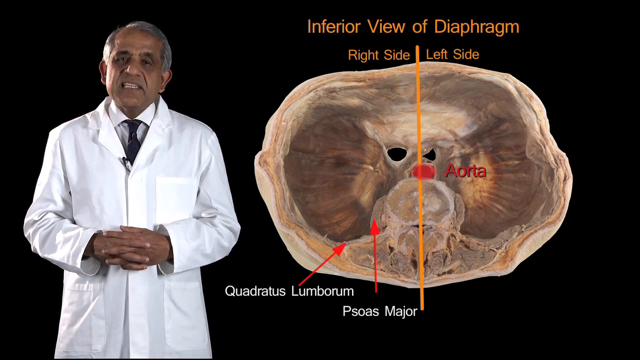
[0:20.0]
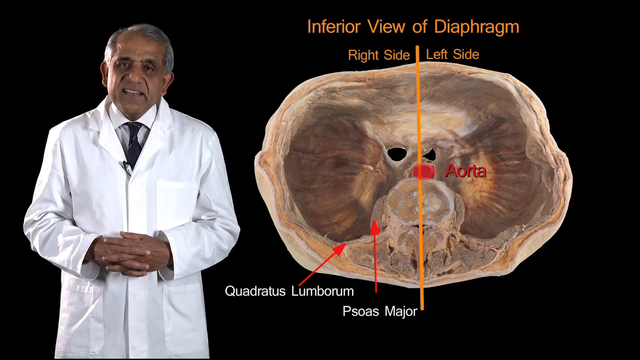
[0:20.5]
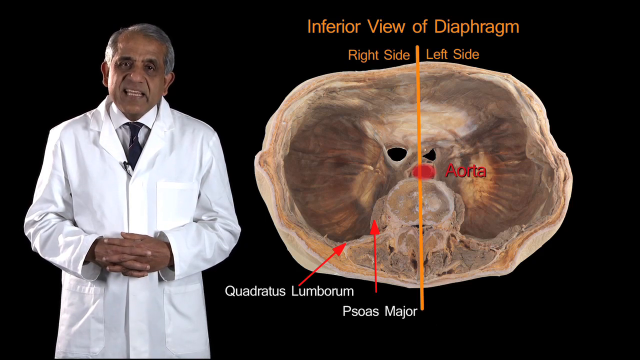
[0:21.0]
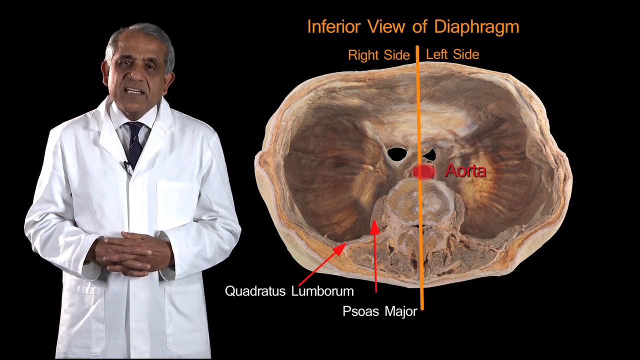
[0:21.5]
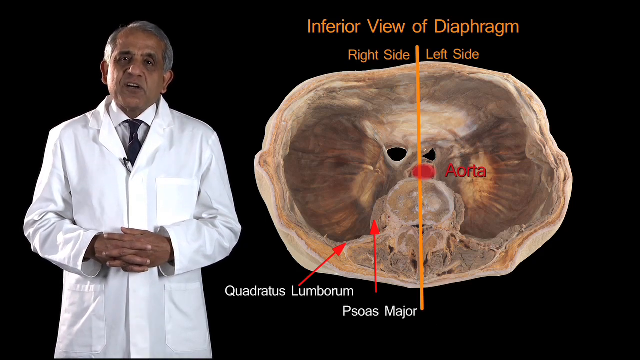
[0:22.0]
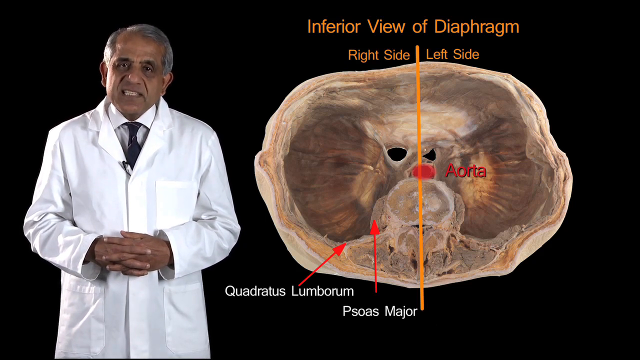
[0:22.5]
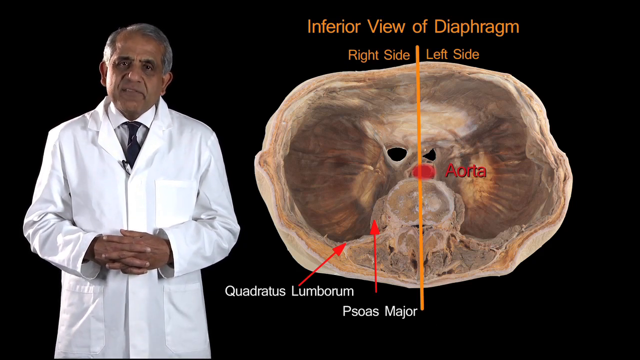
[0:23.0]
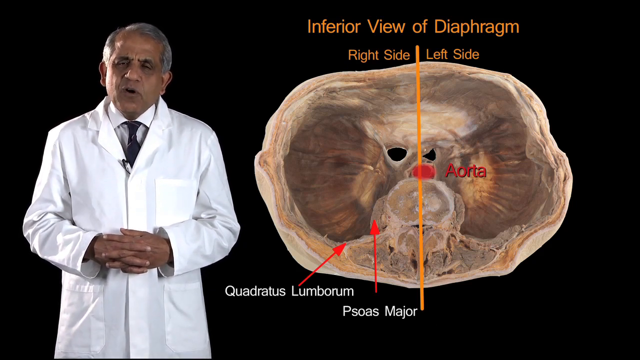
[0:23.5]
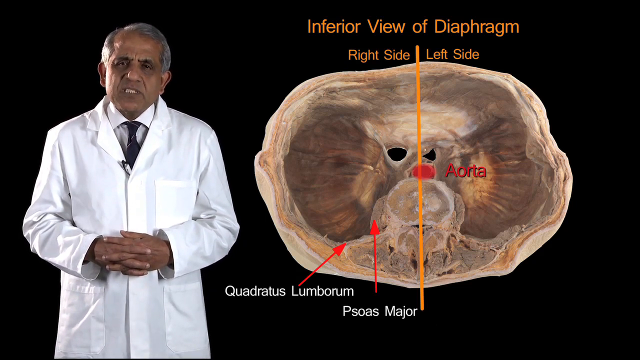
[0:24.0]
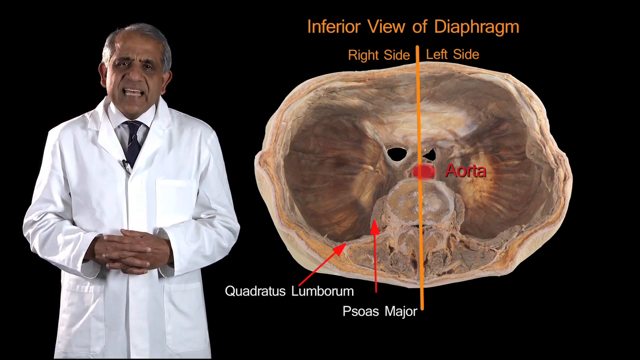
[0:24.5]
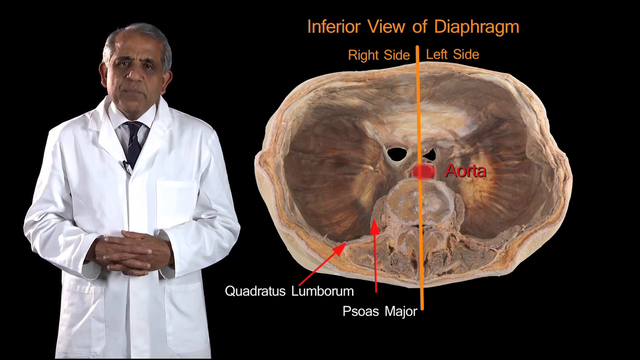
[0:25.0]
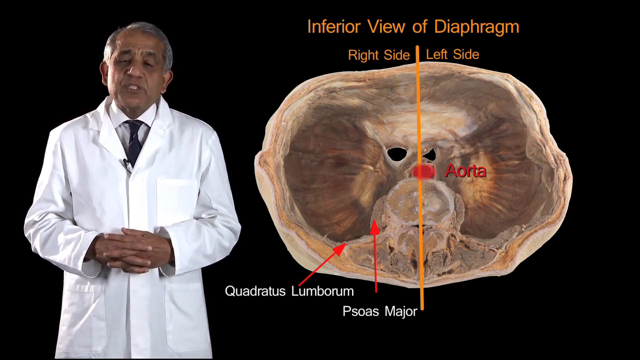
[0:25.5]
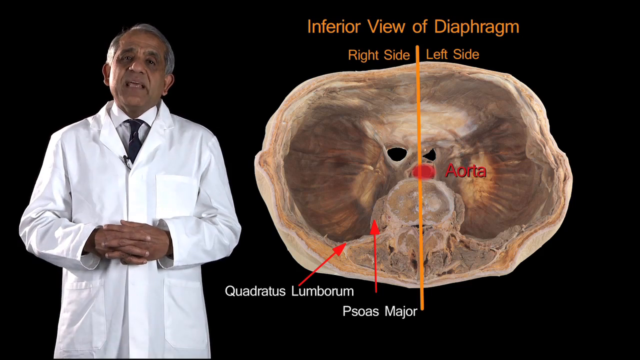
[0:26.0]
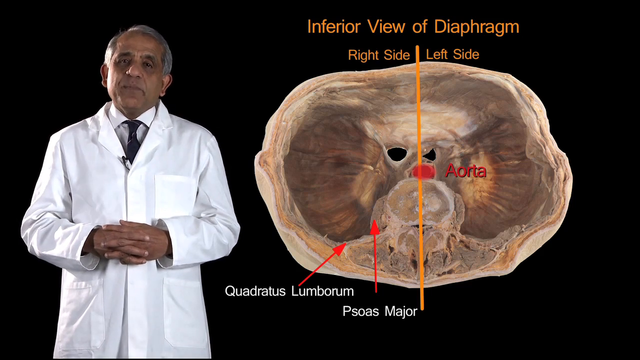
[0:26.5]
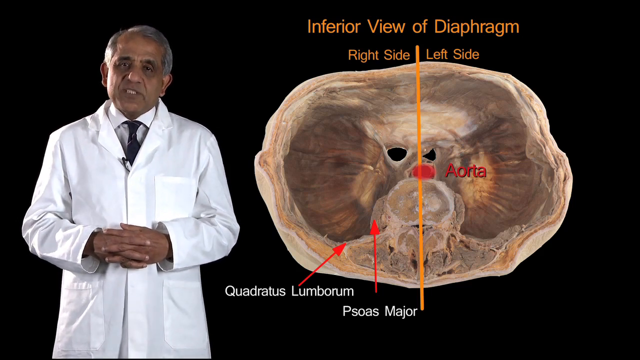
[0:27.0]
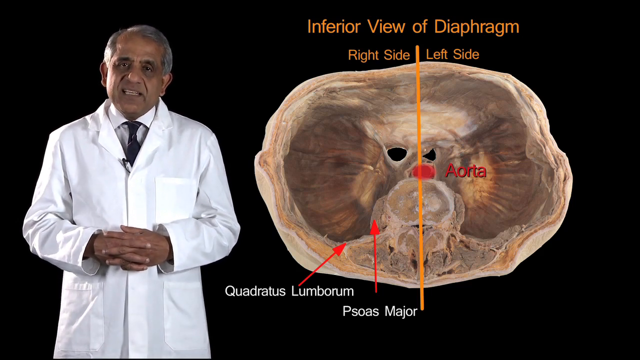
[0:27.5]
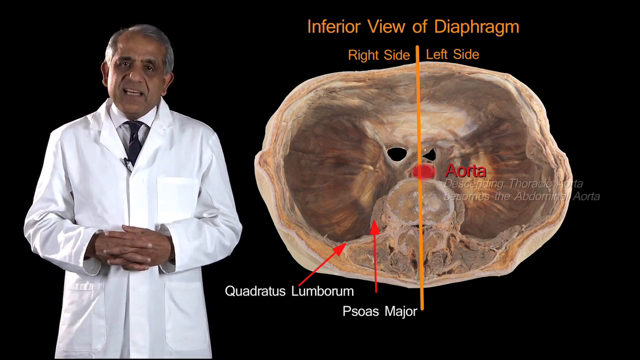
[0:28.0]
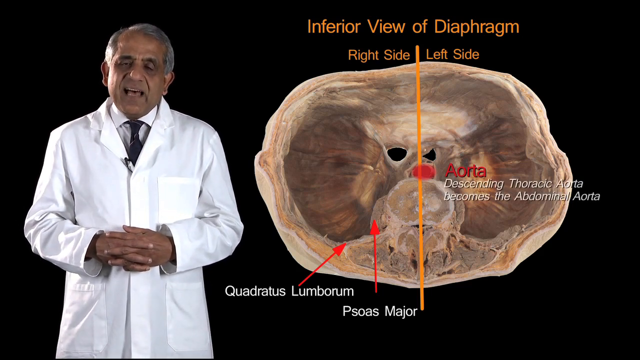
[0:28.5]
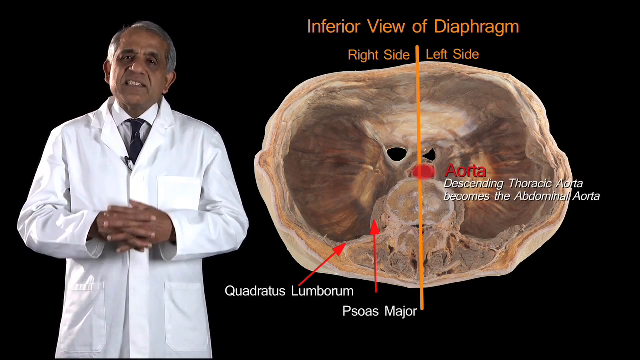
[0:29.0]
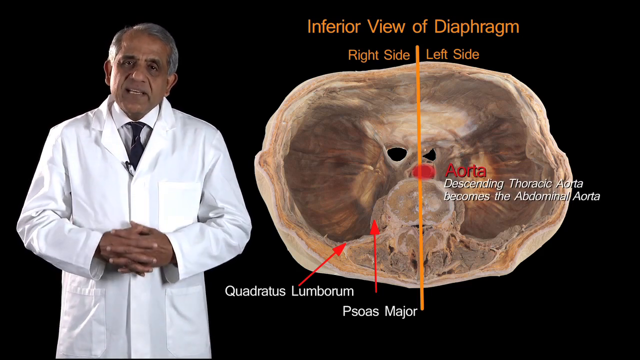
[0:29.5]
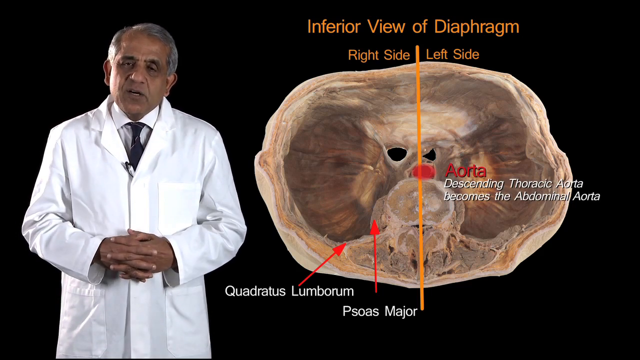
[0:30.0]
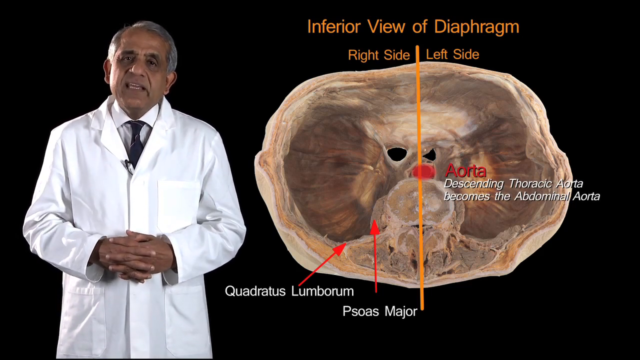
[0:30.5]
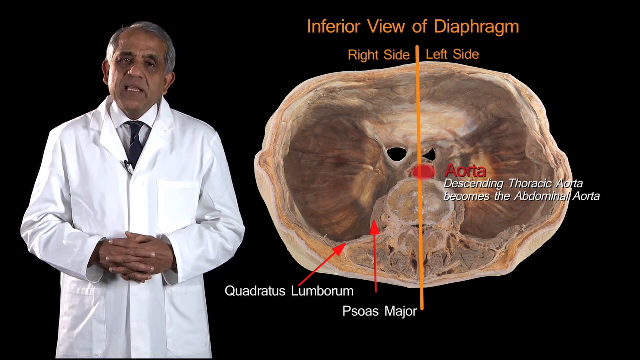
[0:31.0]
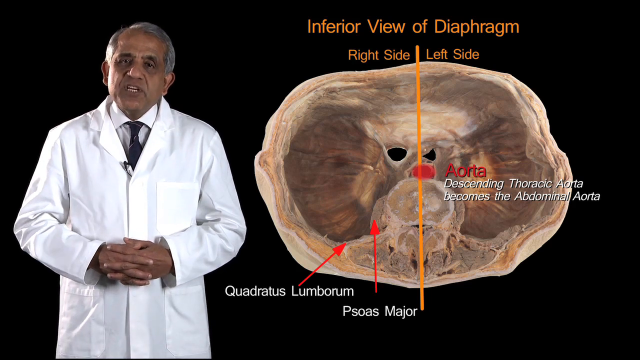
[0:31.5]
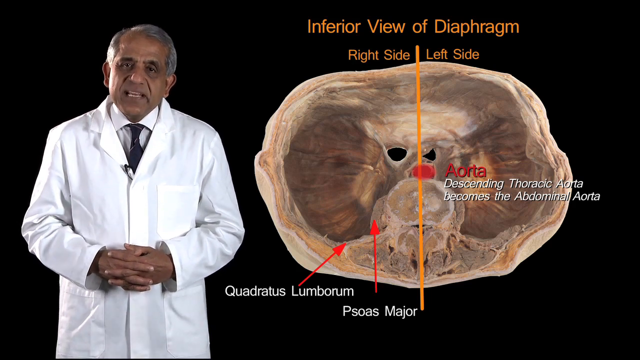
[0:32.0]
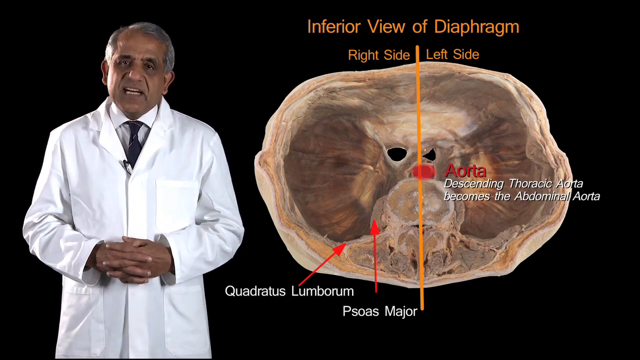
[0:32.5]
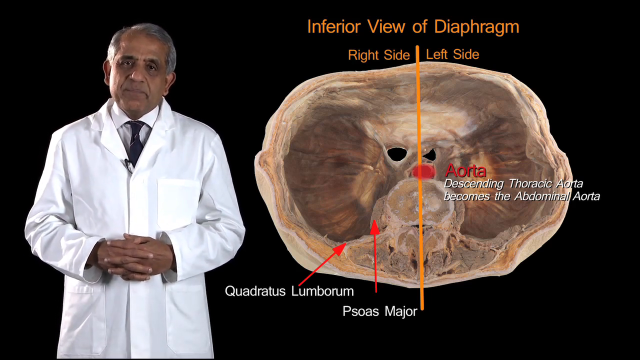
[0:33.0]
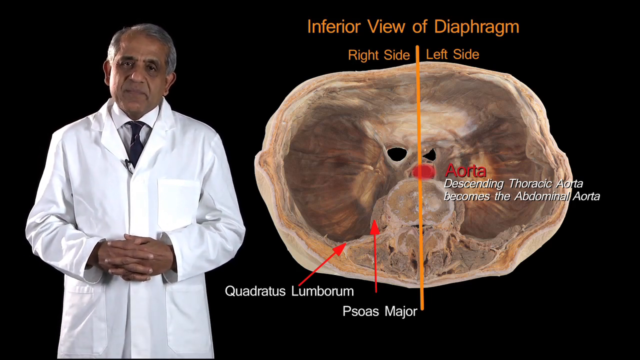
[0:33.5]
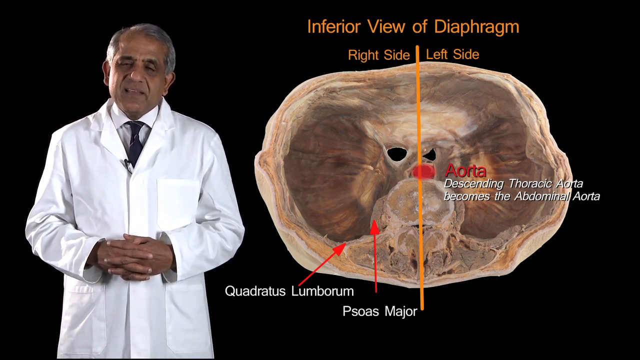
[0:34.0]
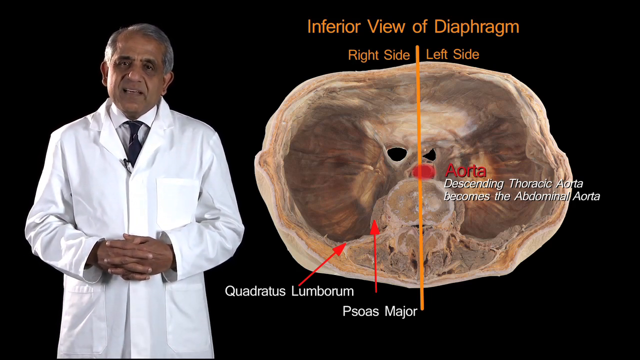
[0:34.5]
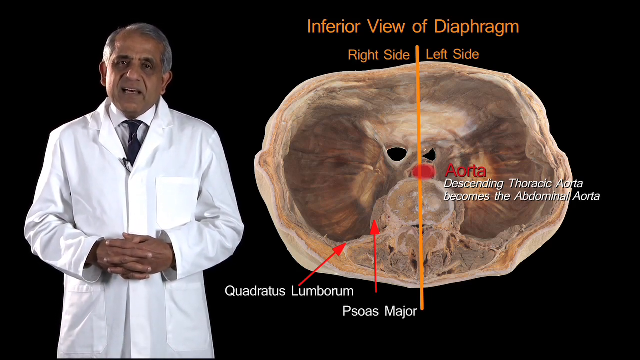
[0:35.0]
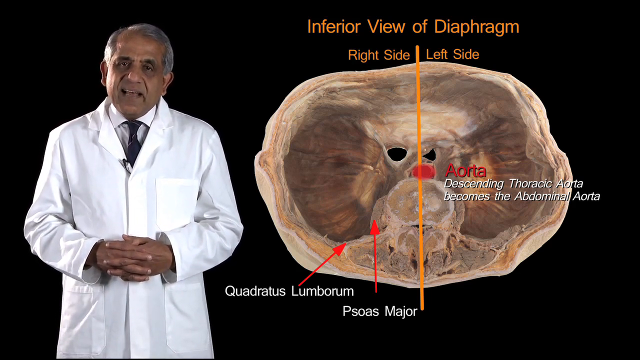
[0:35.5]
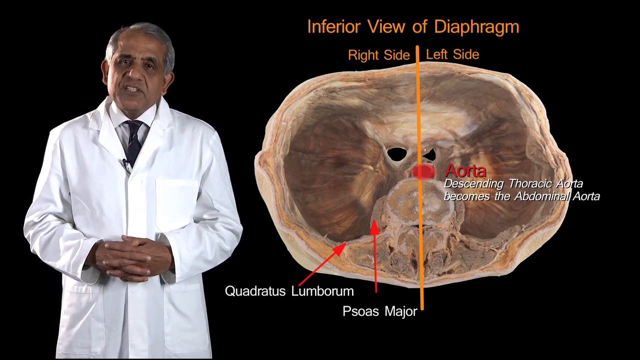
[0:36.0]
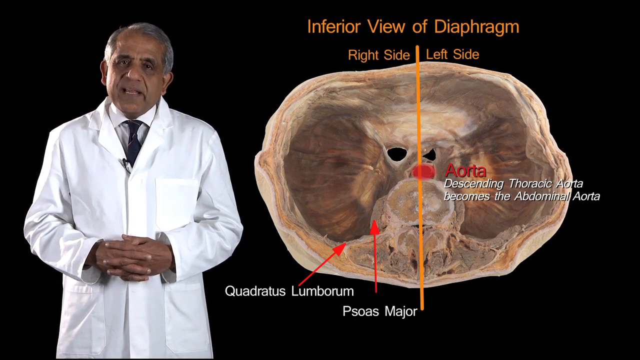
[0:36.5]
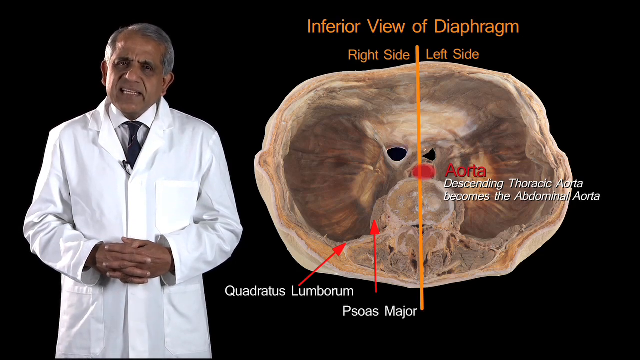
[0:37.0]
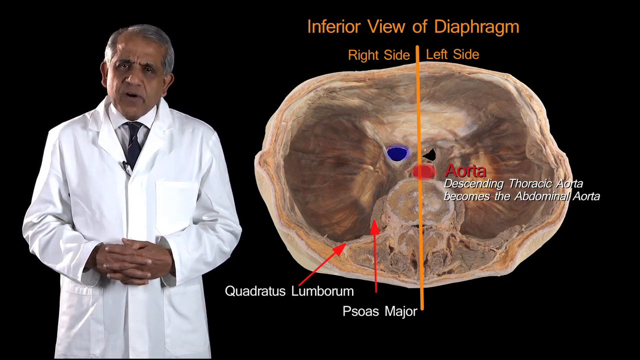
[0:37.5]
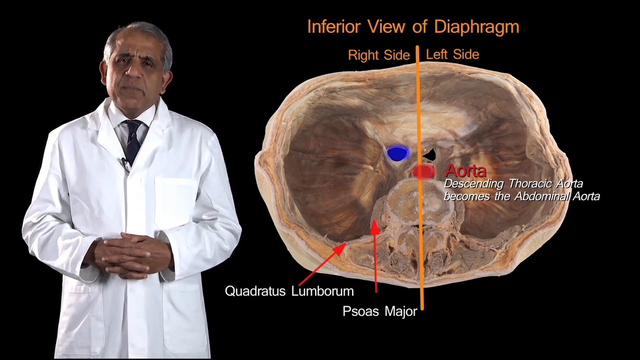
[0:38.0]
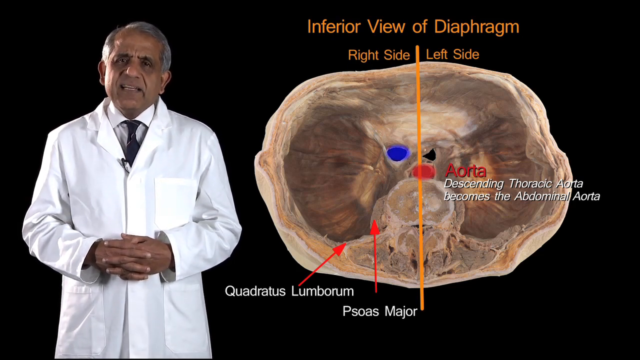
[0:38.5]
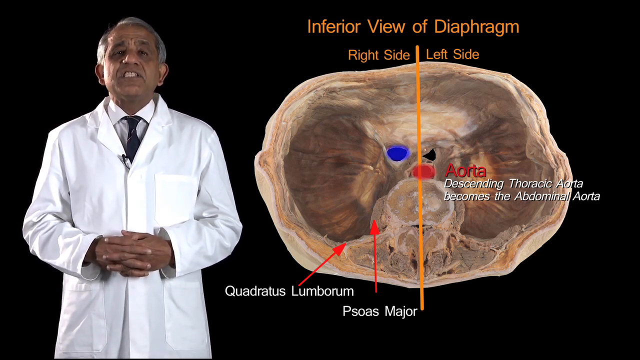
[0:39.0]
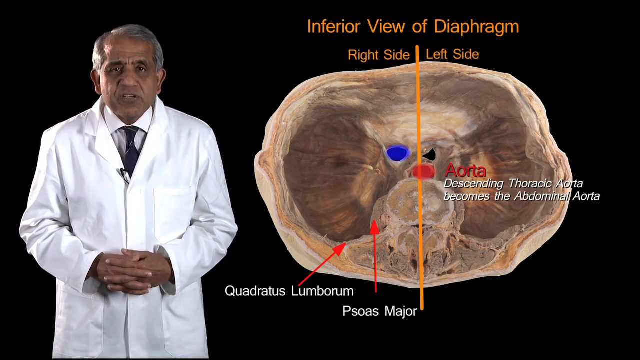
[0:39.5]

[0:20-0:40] The same image continues: the professor is on the left in his white jacket, shirt and tie, and to his right is the image of the inferior view of the diaphragm, labelled "right side" and "left side" in orange text. The aorta is labelled in red text, along with labels for the quadratus lumborum and the psoas major. The professor keeps talking with his hands folded in front of him. Underneath "aorta", the words "descending thoracic aorta becomes the abdominal aorta" appear in white text. The professor keeps talking, and a blue dot appears on the screen. Nothing else changes; the size of the professor and of the diaphragm picture stays the same, and the same subject remains on a black background.